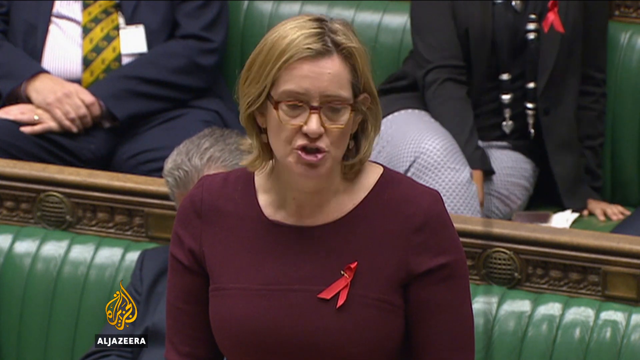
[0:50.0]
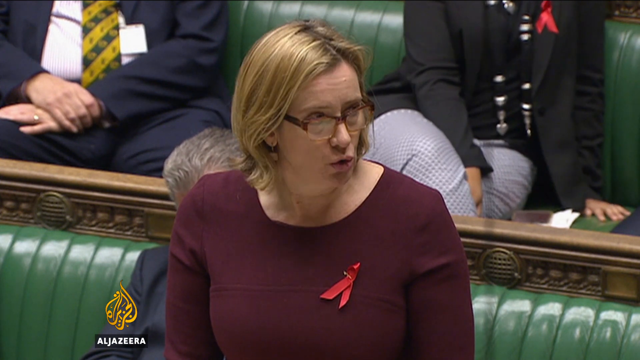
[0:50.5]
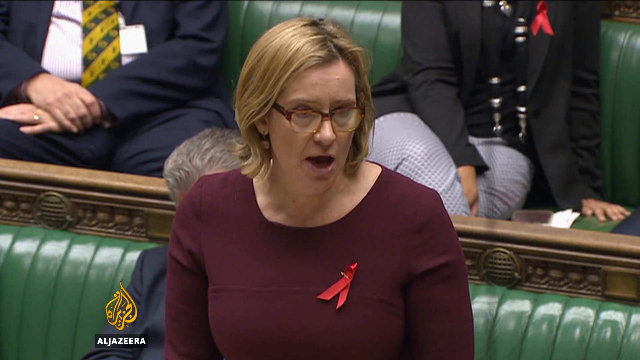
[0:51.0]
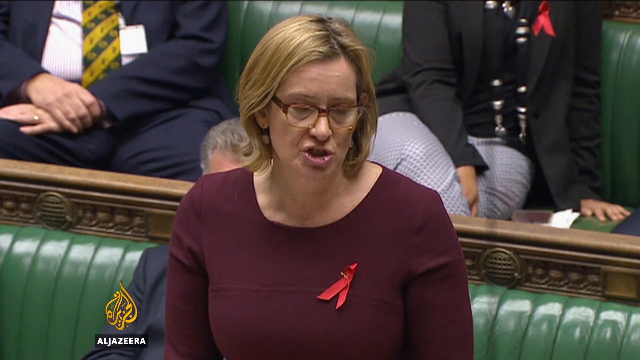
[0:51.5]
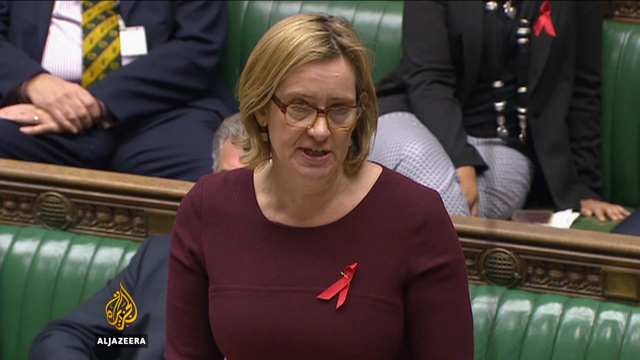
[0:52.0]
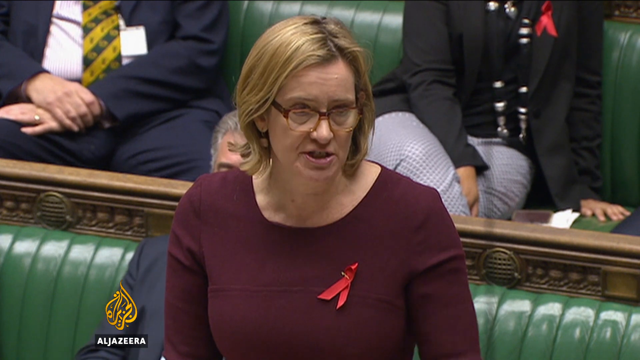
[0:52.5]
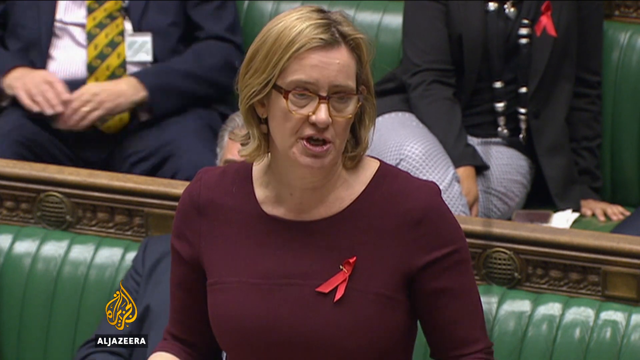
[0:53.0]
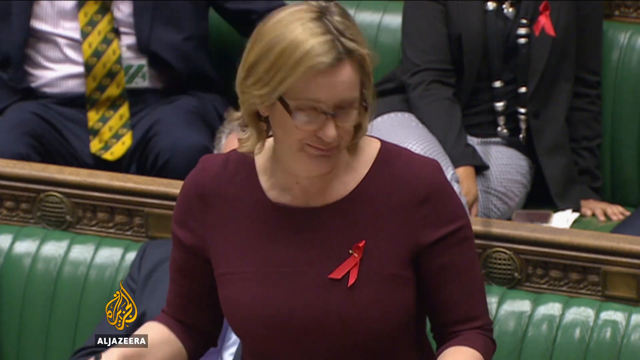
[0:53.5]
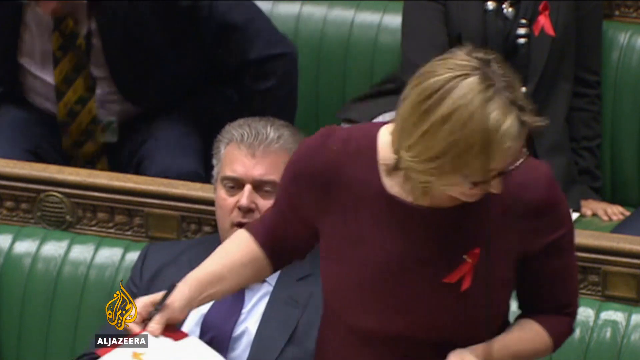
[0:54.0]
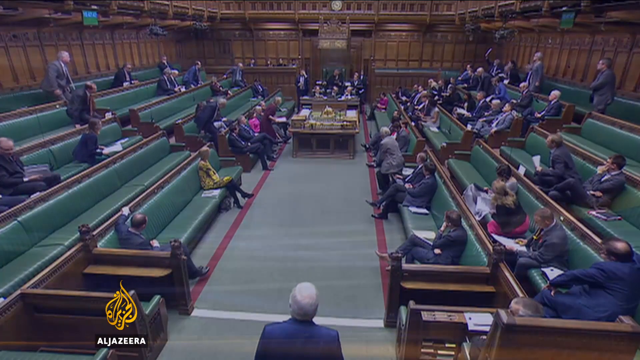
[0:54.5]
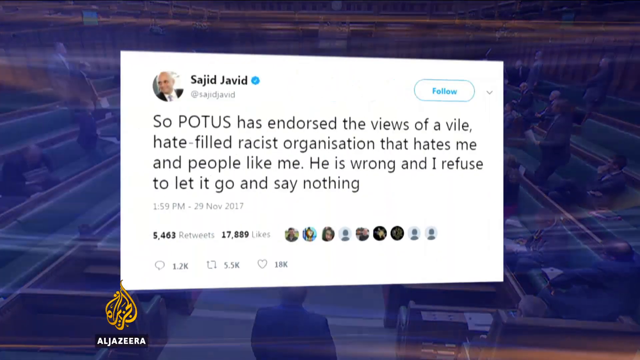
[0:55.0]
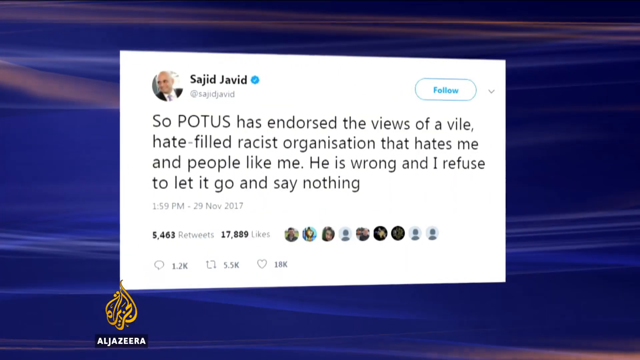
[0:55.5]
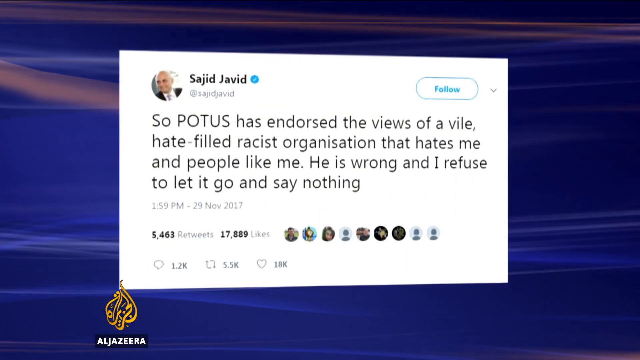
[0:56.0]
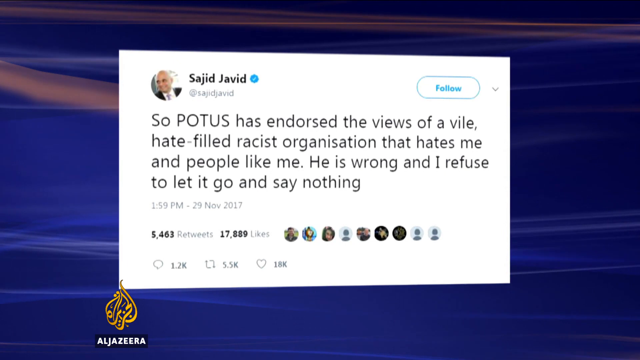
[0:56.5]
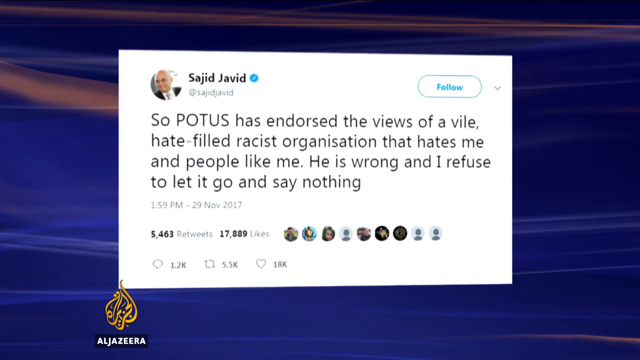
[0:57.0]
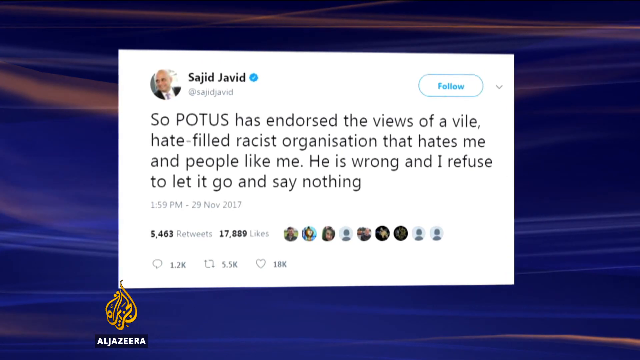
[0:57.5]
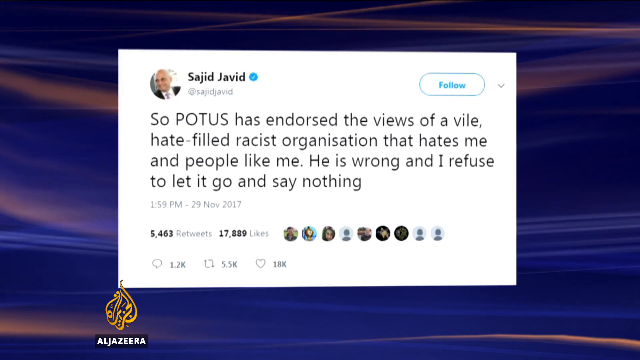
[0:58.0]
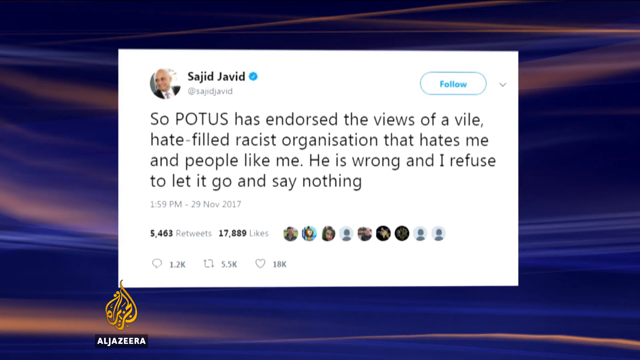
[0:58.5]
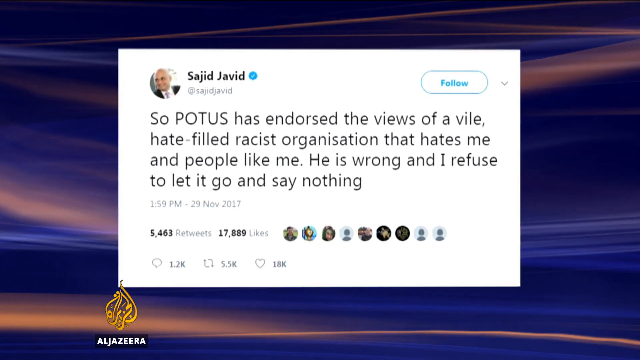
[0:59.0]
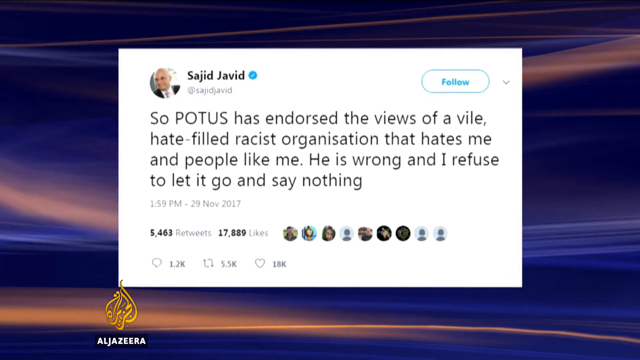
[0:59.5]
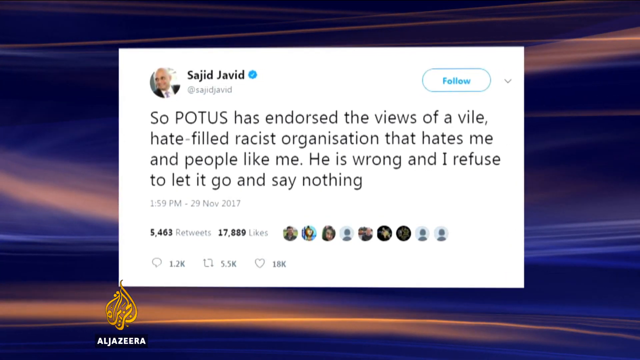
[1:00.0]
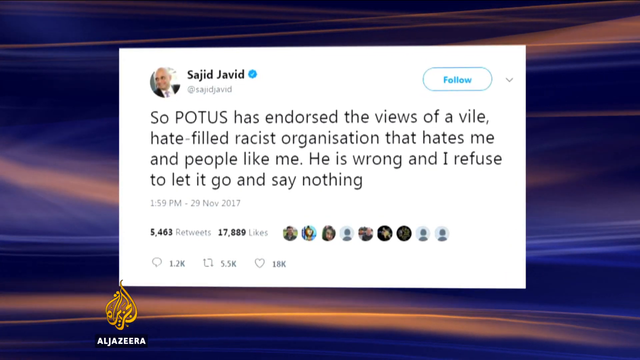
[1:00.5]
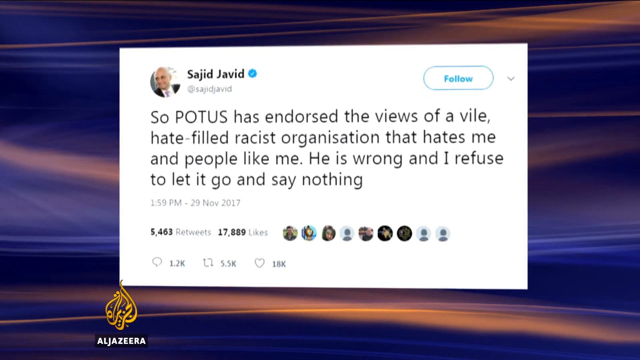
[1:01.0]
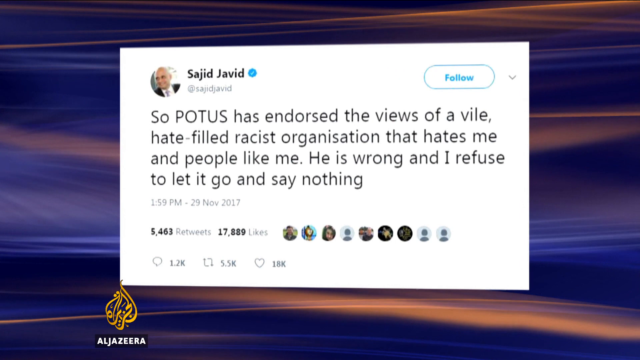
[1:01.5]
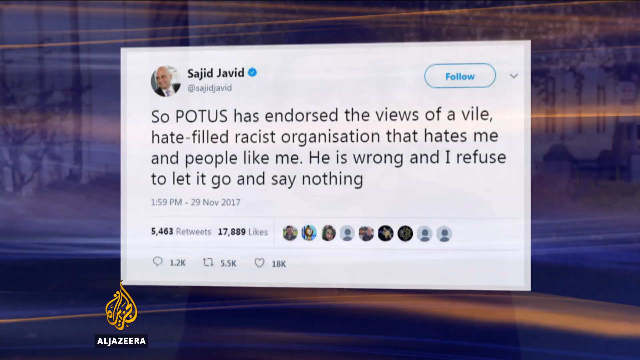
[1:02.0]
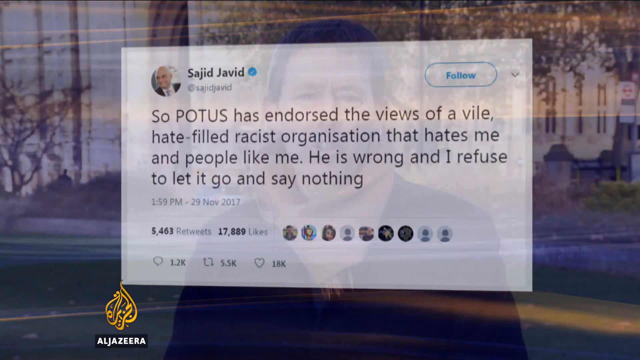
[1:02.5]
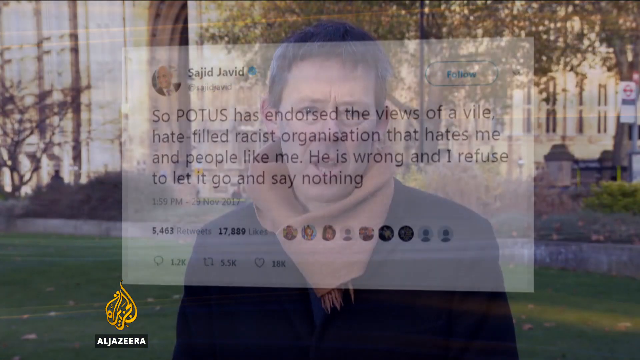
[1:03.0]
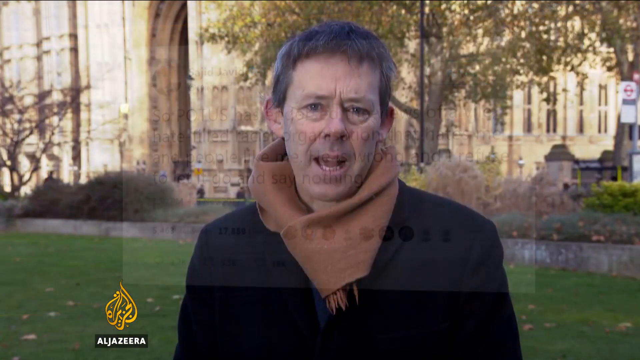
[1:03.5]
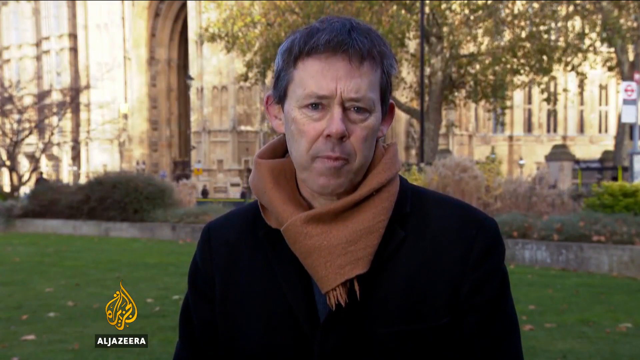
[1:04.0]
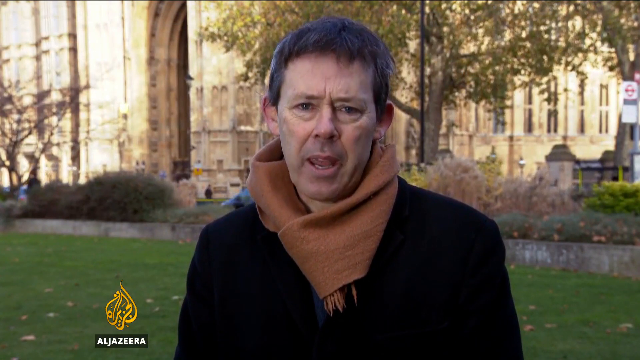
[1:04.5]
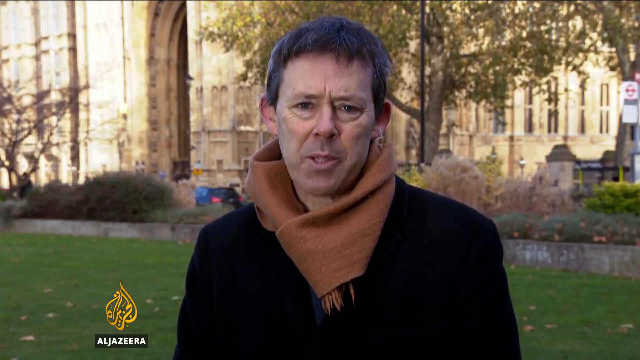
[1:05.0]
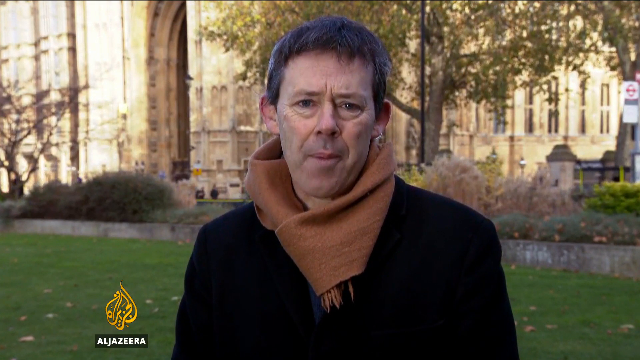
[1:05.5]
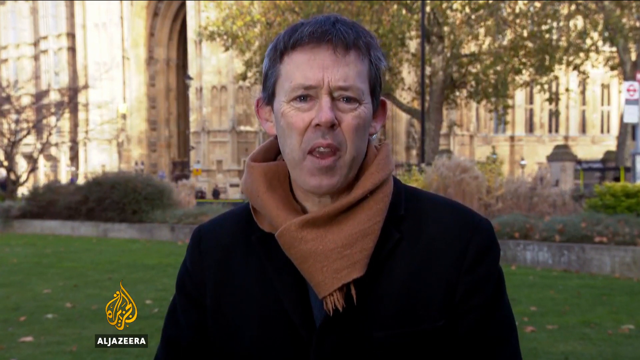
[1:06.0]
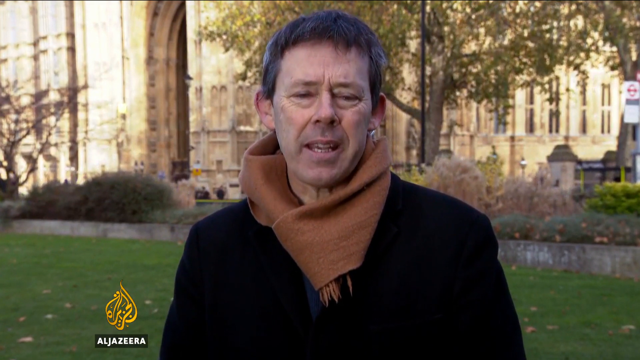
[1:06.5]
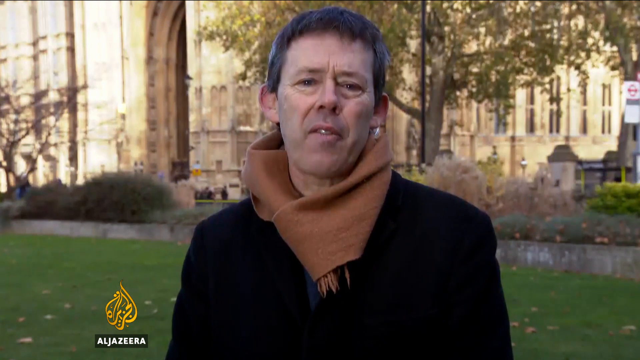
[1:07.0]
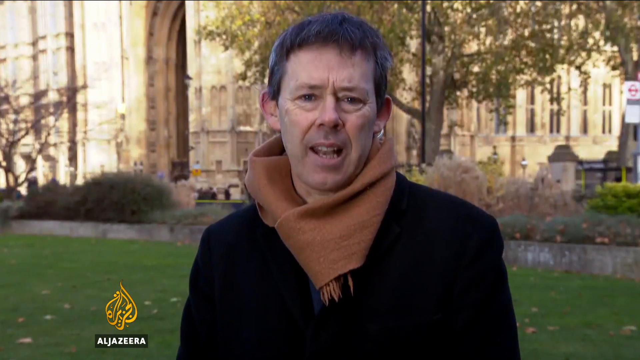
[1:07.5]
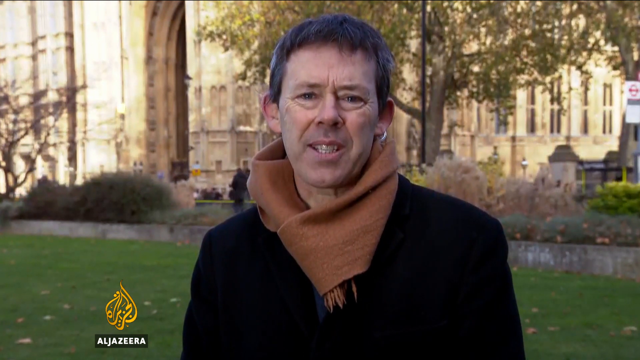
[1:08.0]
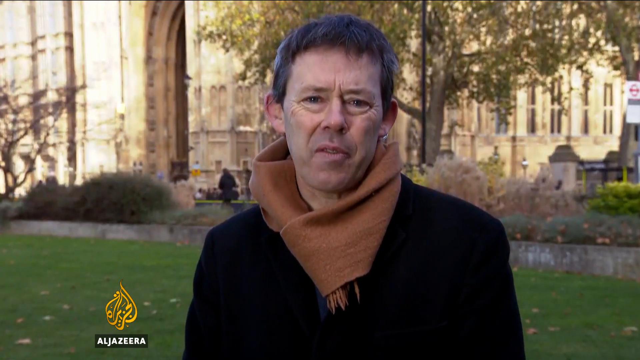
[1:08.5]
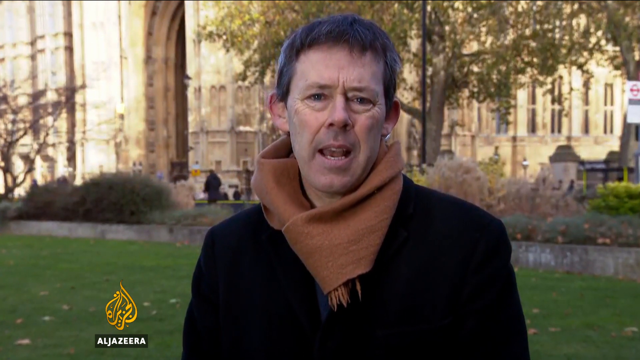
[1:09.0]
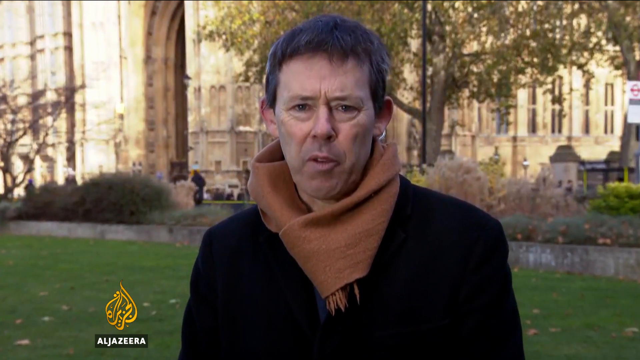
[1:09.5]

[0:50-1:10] A close-up shows the short-blonde-haired woman speaking at the parliament session. She looks off to the right side of the room, then stands up and sits down. The screen transitions to an enlarged image of a tweet from Sajid Havid, reading: "the President of the United States has endorsed the vile views of a hate-filled racist organization that hates me and people like me. He is wrong and I refuse to let it go and say nothing." The tweet floats on the screen for a few seconds, then the video cuts to a reporter standing outside Parliament, with the building visible in the background. The man in the foreground has very short, choppy, dark hair and wears a very large tan scarf tucked into his black jacket, and he speaks directly toward the camera.